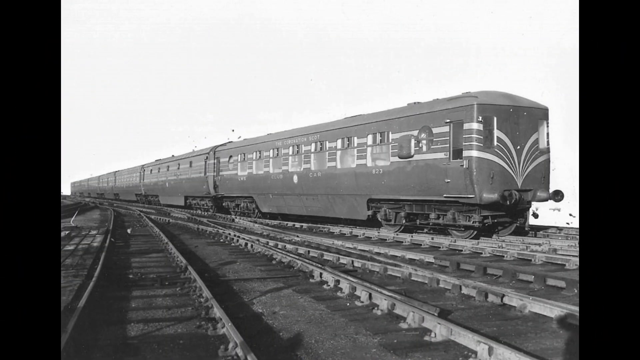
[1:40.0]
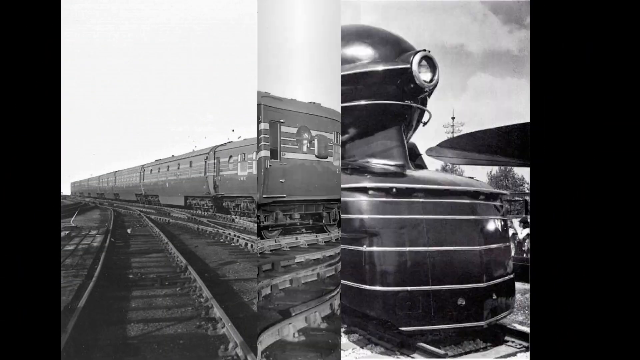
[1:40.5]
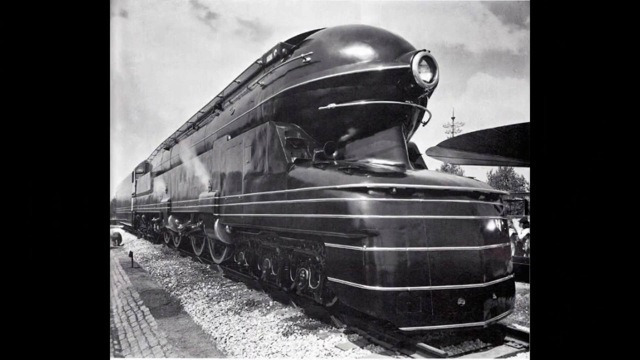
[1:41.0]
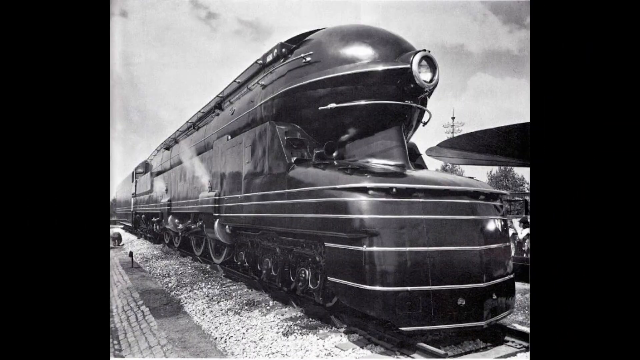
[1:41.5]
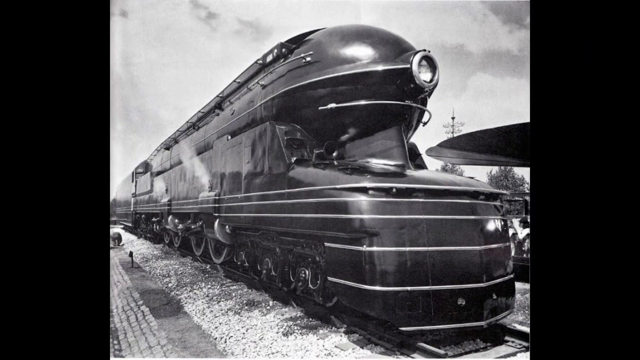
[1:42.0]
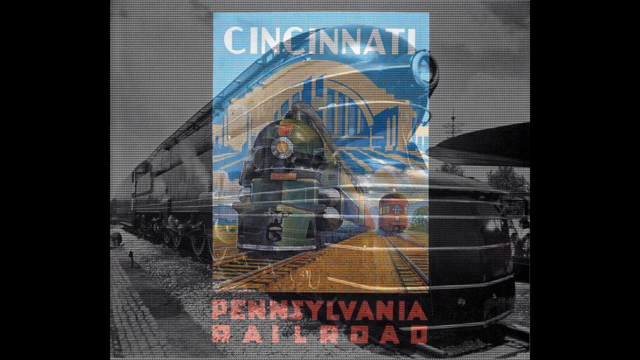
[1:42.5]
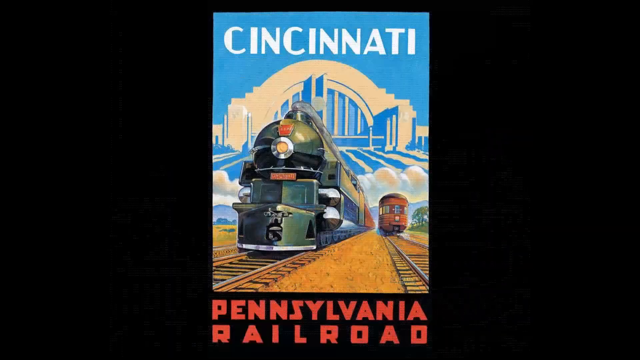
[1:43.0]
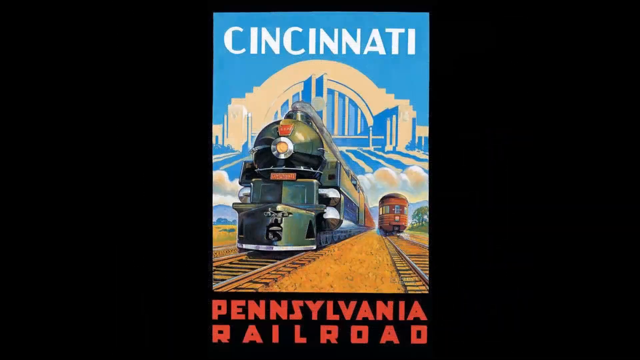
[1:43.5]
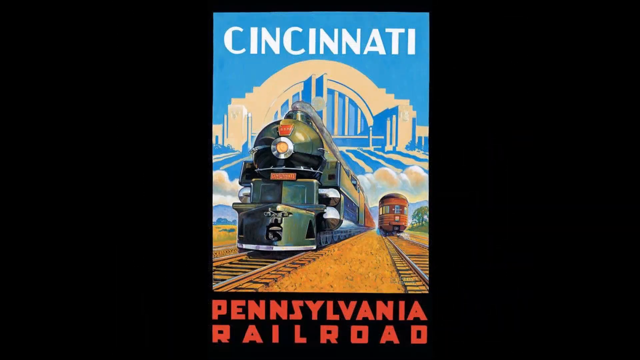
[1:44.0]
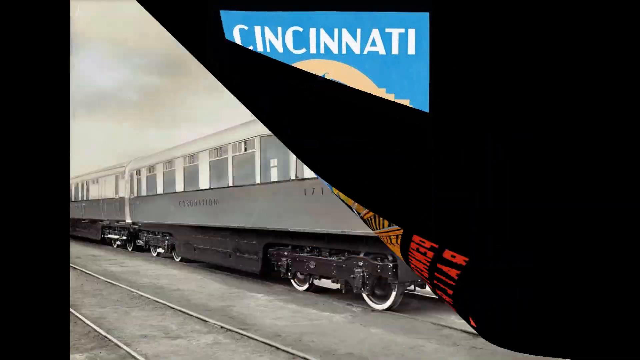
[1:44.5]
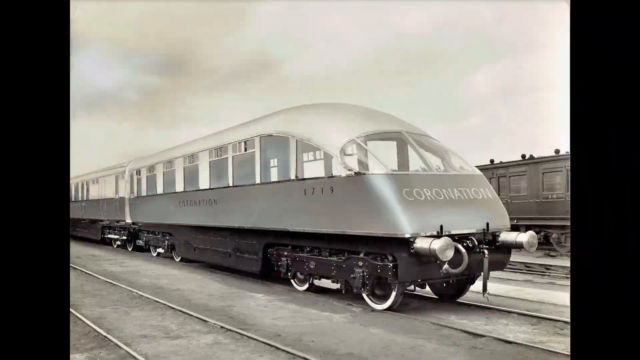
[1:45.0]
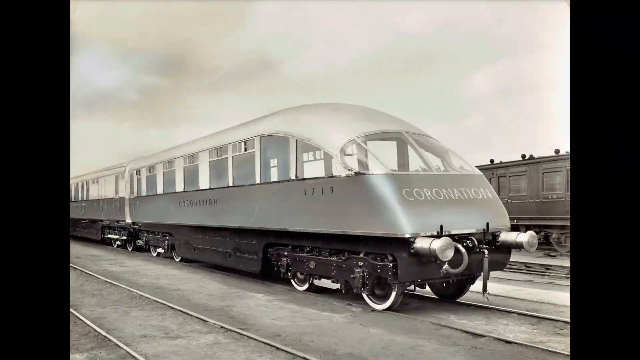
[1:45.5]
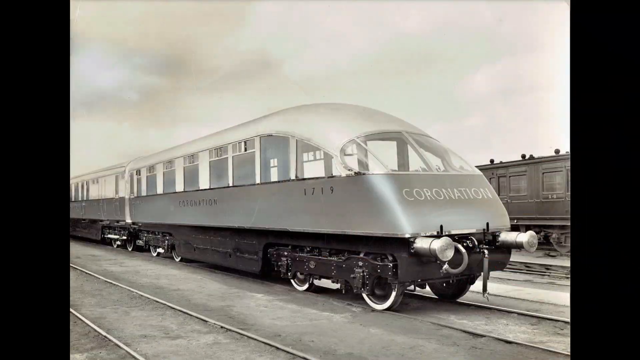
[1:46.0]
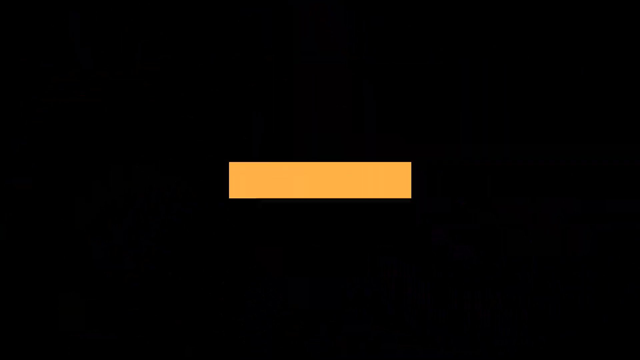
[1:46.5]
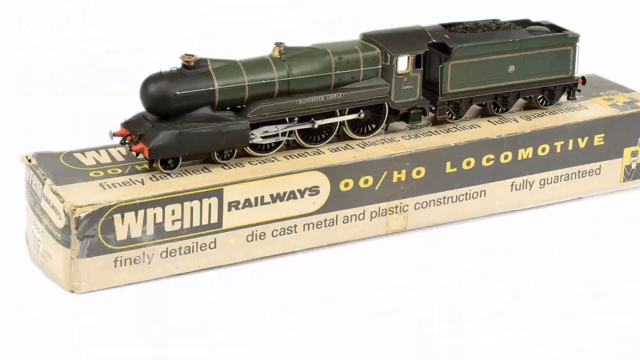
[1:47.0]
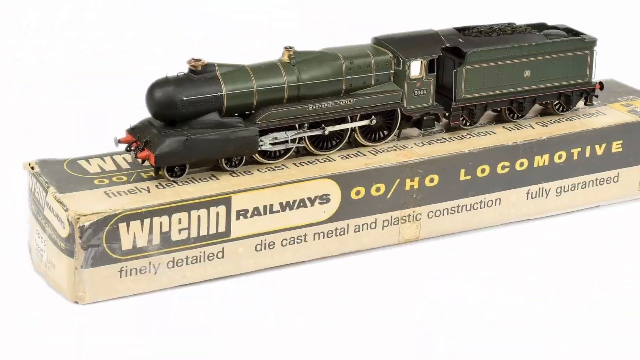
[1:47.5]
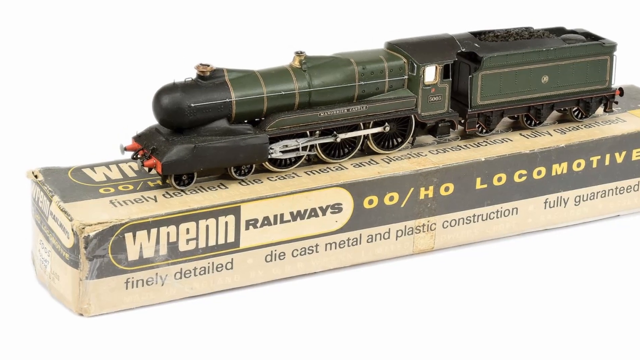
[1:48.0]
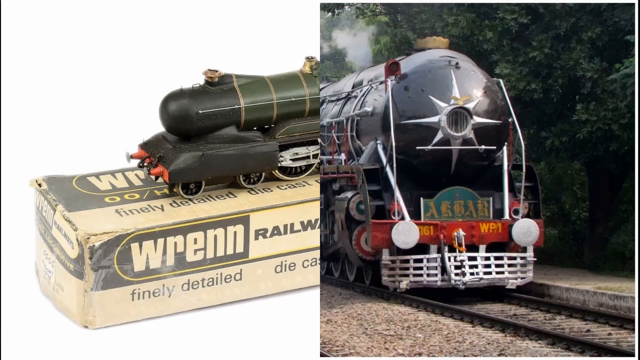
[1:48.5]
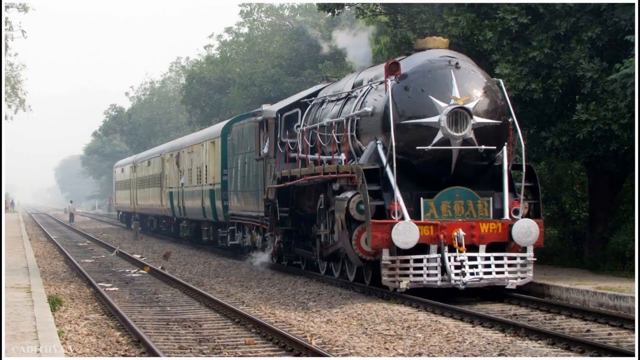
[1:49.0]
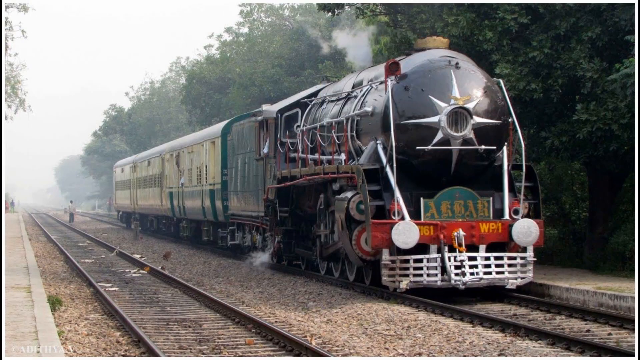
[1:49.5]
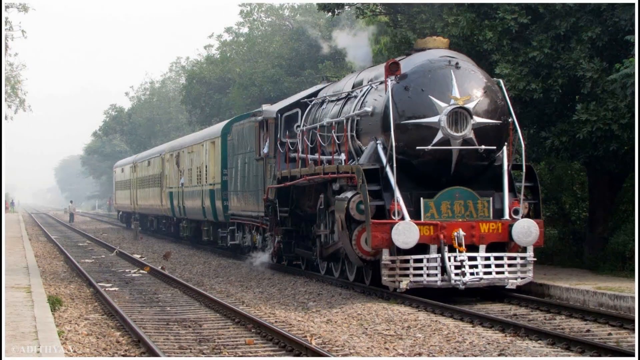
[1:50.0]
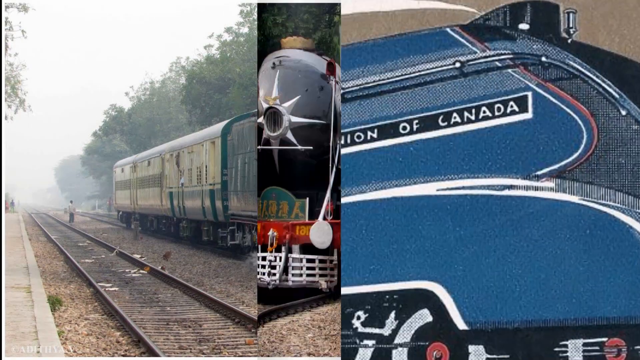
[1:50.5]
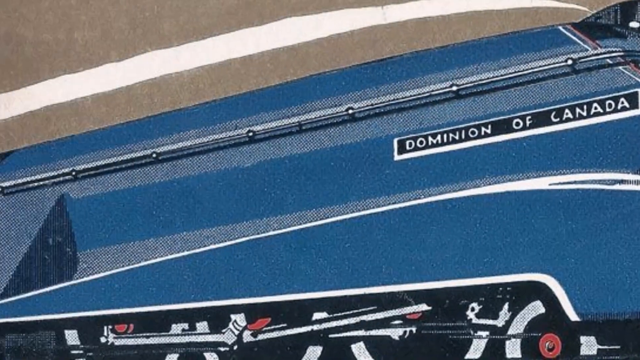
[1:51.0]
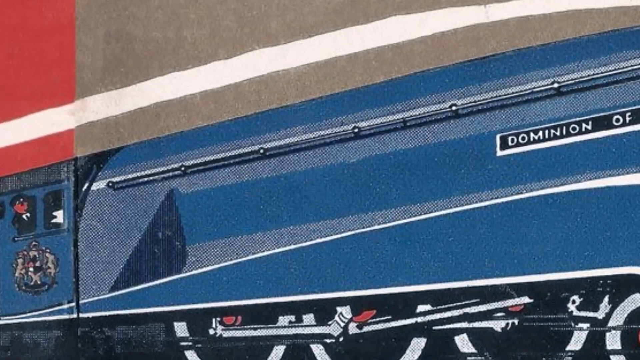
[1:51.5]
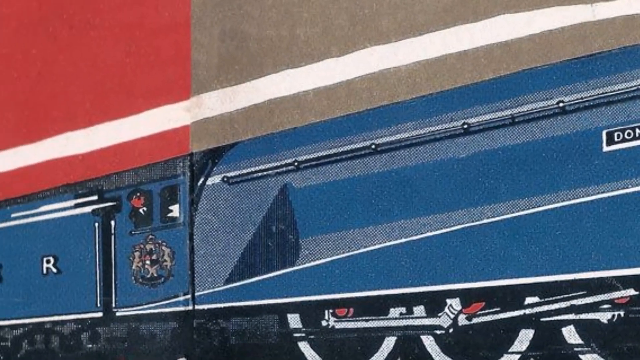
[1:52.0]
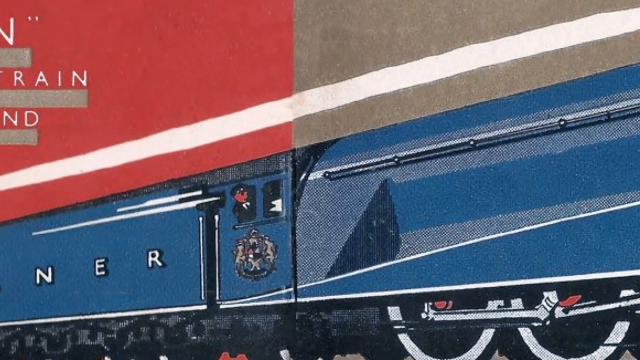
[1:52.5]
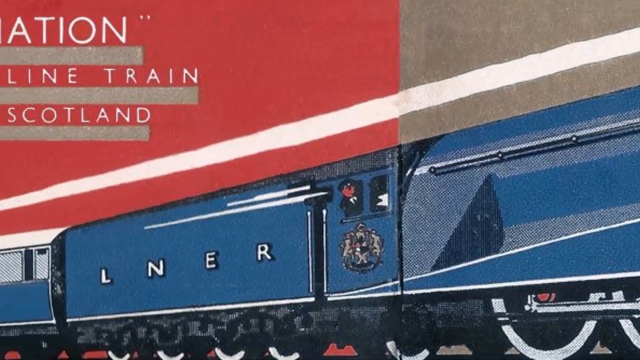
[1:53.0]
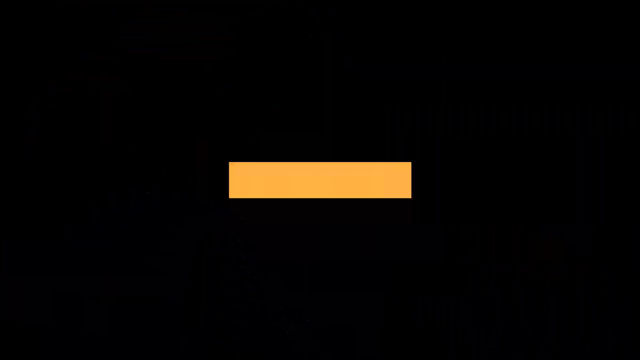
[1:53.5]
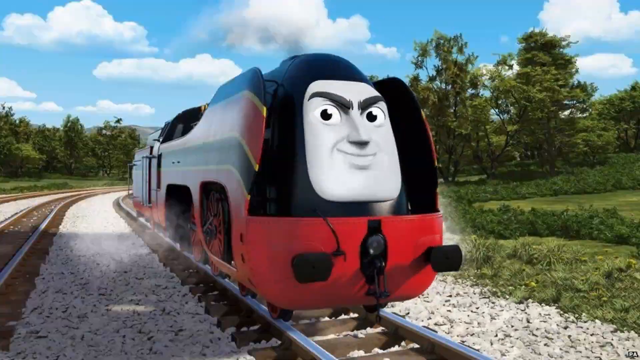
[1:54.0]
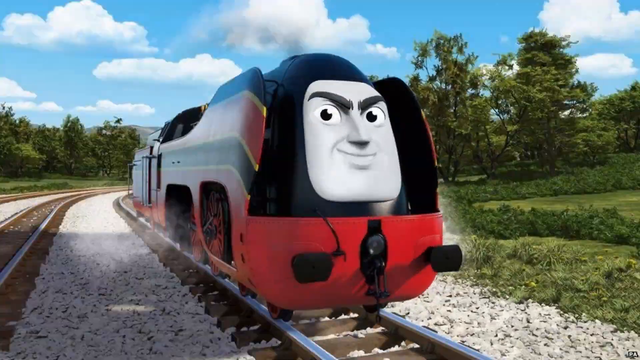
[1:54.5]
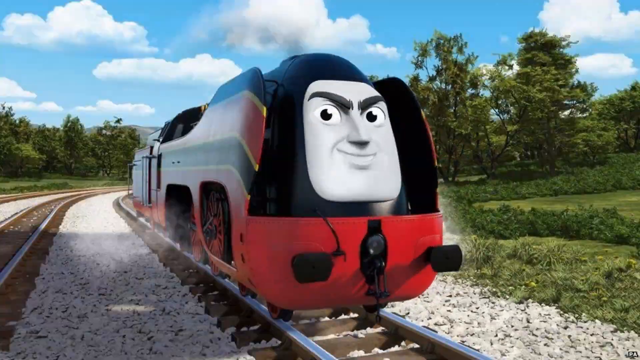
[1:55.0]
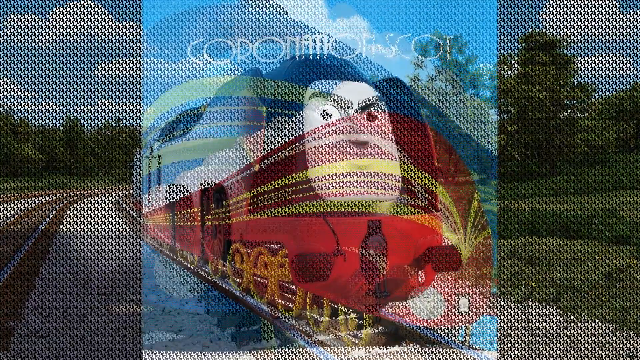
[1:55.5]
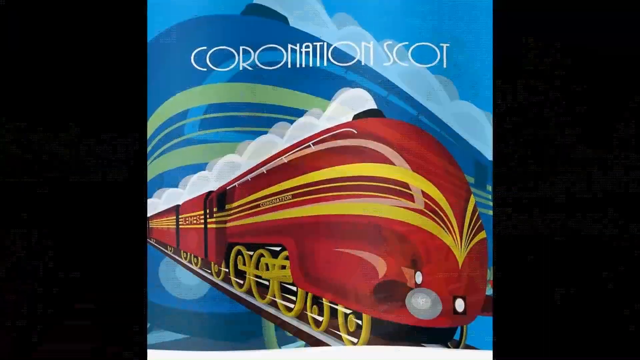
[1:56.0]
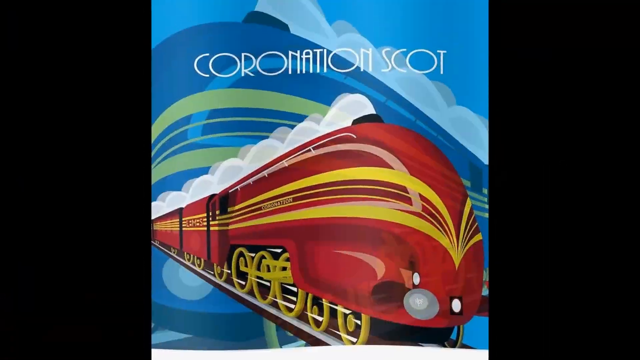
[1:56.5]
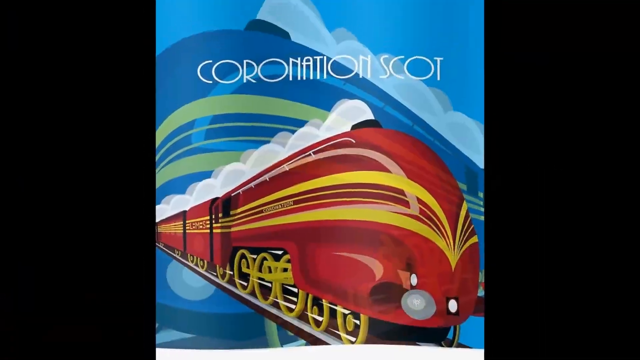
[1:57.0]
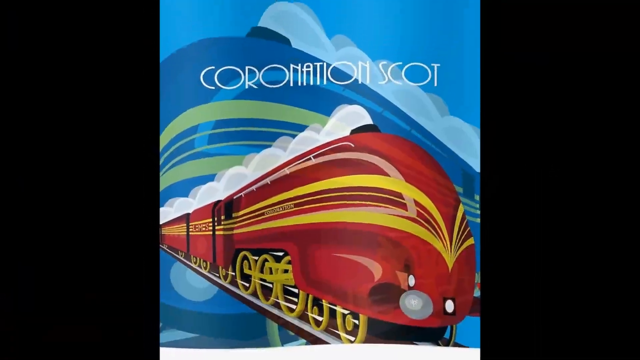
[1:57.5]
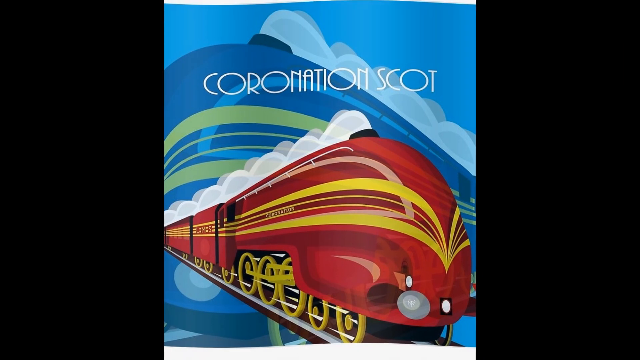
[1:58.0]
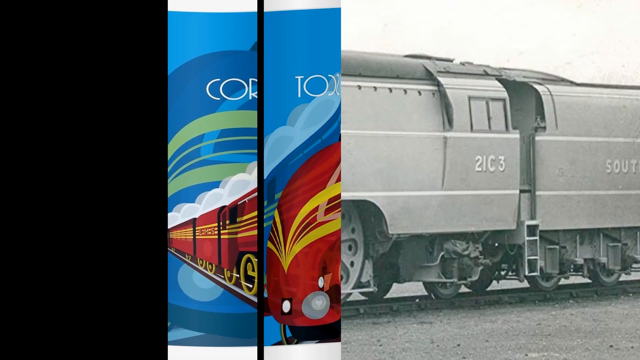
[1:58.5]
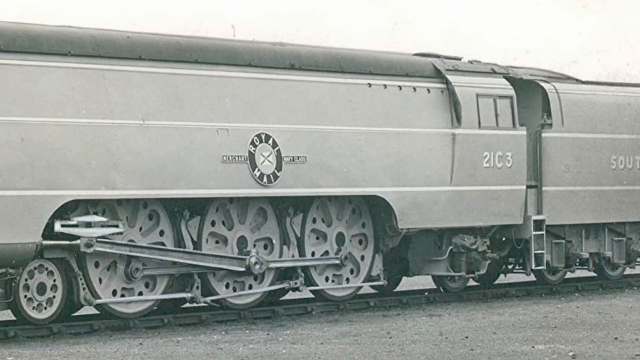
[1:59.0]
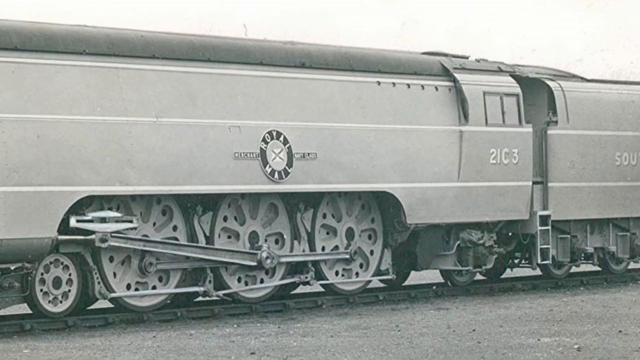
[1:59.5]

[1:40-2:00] A black and white still shows a black train with a rounded front, an unusual base, and either a window or a light at the front that is very prominent and very round. Next is what is apparently an advert that says "Cincinnati Philadelphia Railroad", a painted image that is predominantly blue. A black and white image then shows a very modern-looking train with "Coronation" on the front and the numbers 1719 on the side; it has a translucent glass top through which almost the whole interior of the train is visible. A photograph of a model train follows, with the text "Ran Railways 00HO locomotive"; it is a green steam train on top of a box, with the coal visible in the back of the train. A still photograph of a train follows. Then comes "the Dominion of Canada", a blue train in what looks like a painted image, with the texture of the canvas and its little dots visible as the camera moves over it. Next is a picture of what appears to be a character from Thomas the Tank Engine, a face on the front of a train. "Coronation Scott" follows, a painted, cartoon-like image of a red train on a blue background. Then comes a black and white photograph.